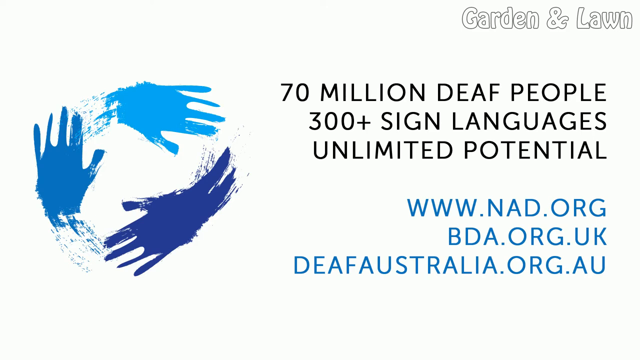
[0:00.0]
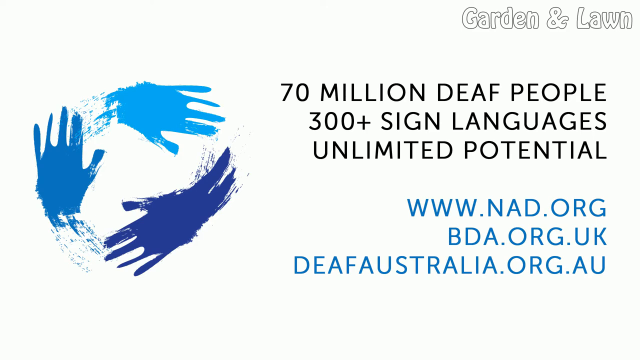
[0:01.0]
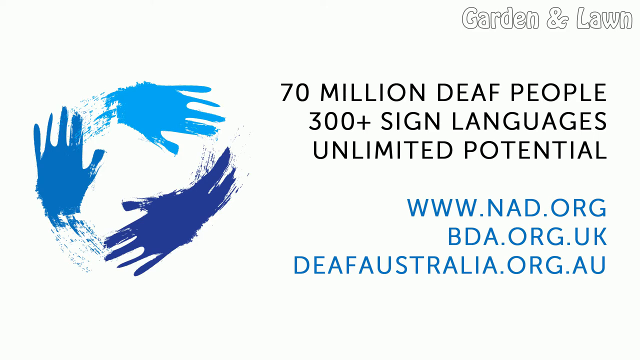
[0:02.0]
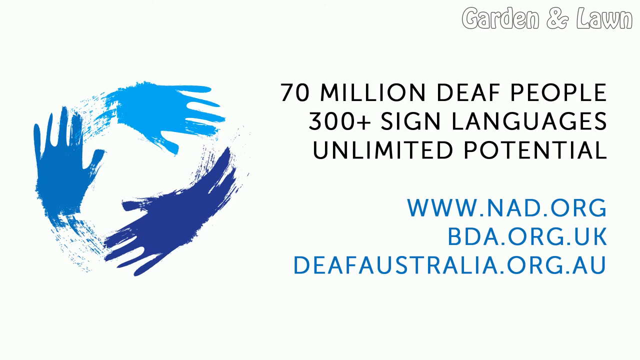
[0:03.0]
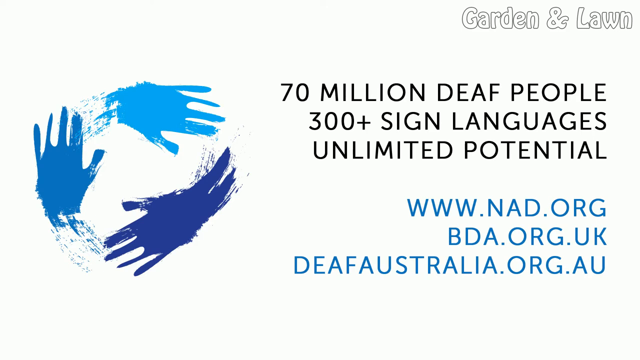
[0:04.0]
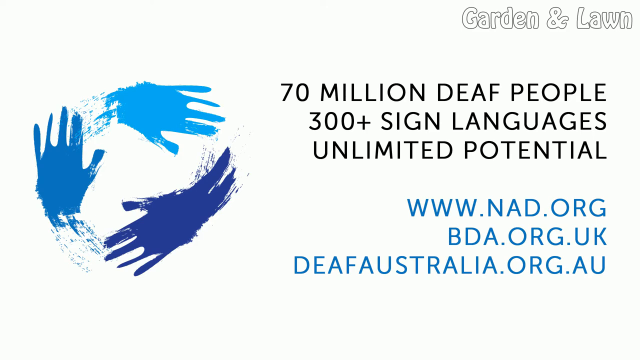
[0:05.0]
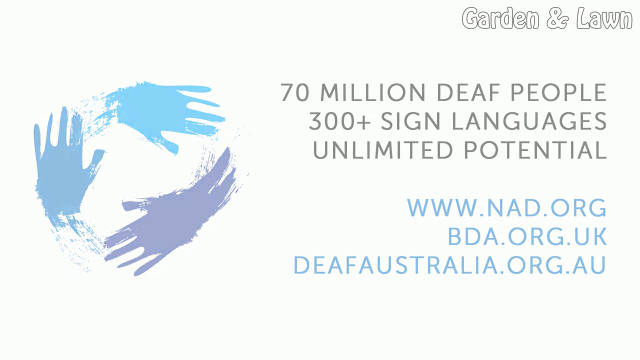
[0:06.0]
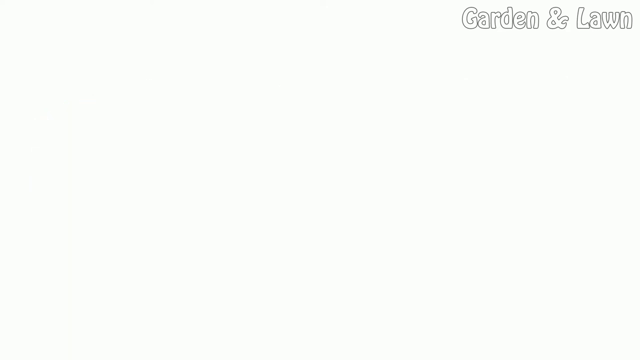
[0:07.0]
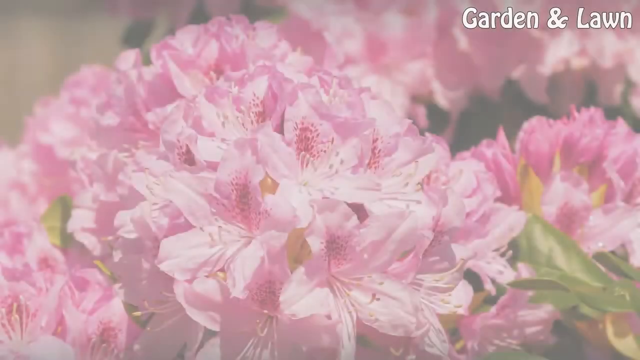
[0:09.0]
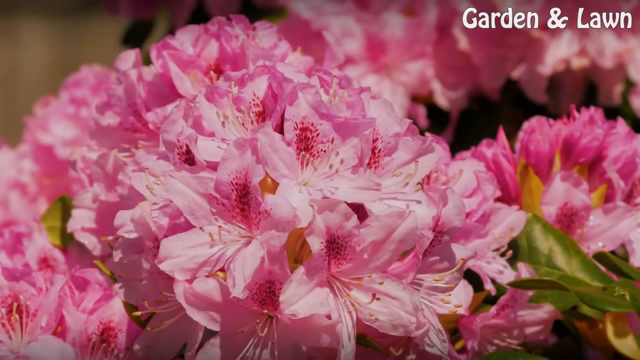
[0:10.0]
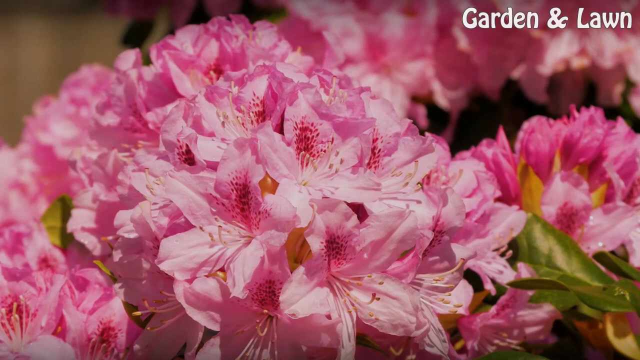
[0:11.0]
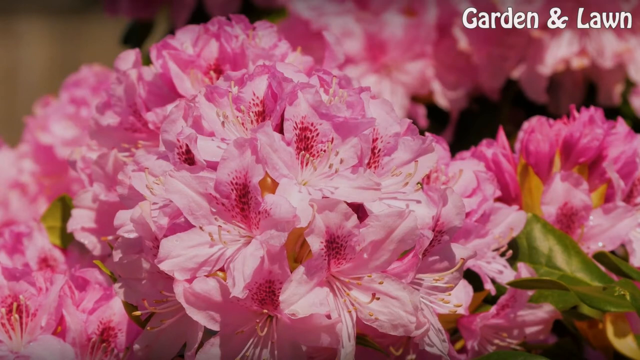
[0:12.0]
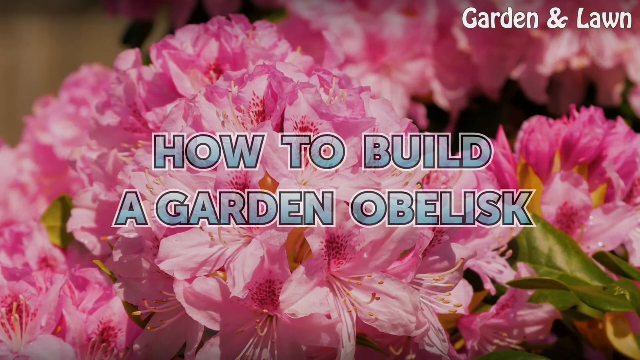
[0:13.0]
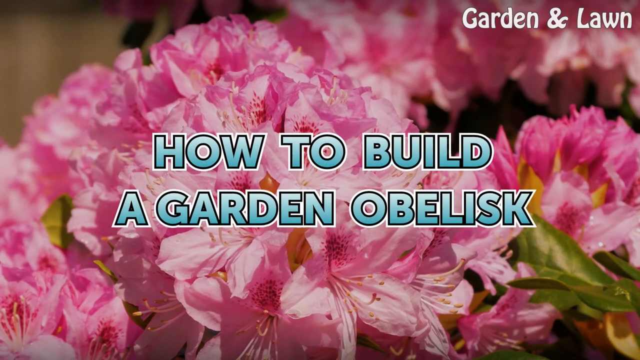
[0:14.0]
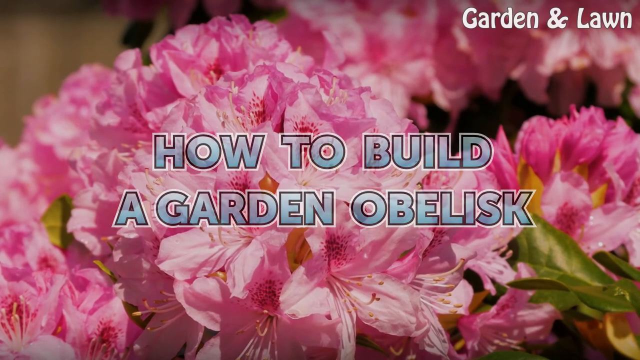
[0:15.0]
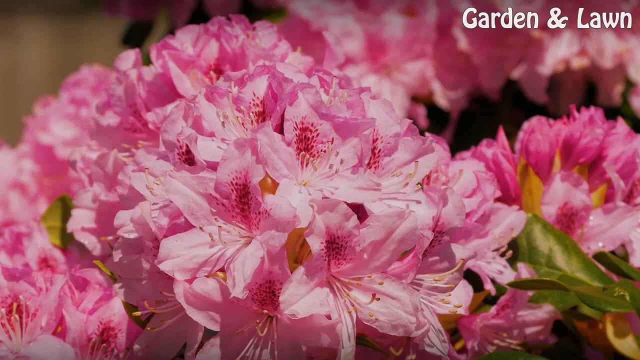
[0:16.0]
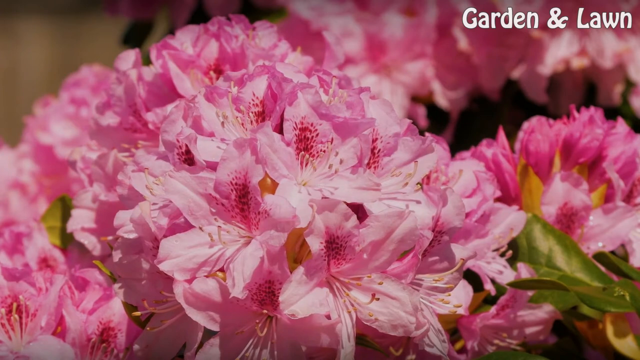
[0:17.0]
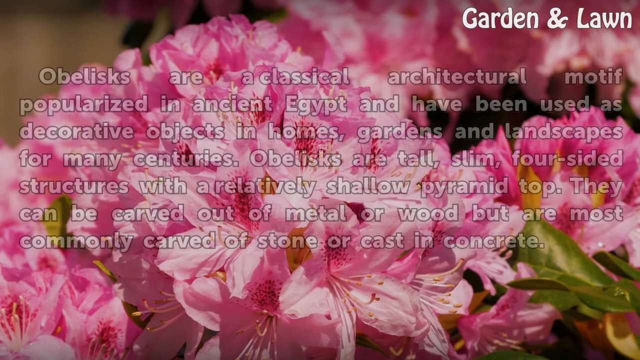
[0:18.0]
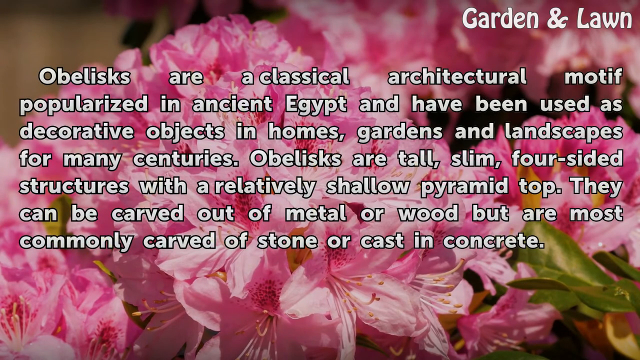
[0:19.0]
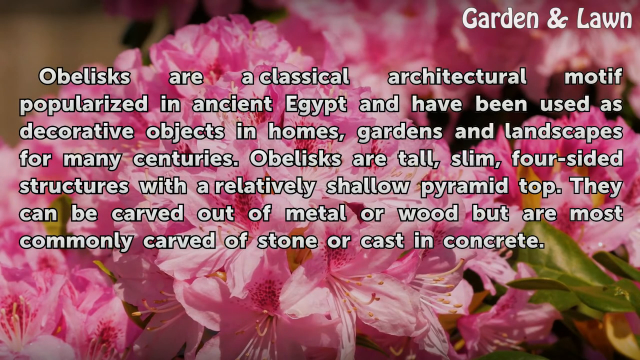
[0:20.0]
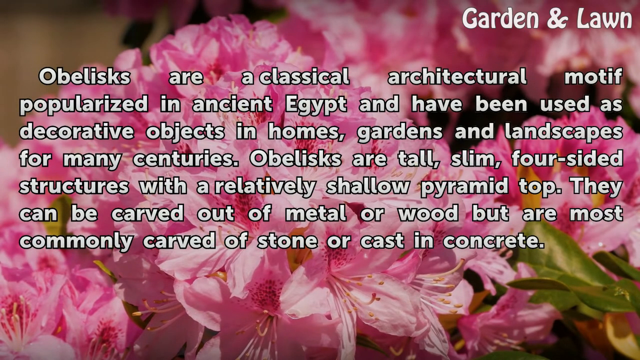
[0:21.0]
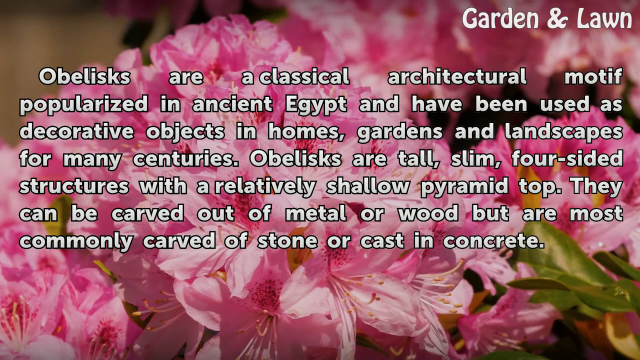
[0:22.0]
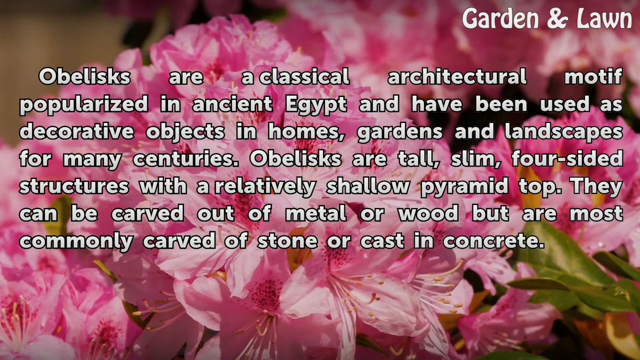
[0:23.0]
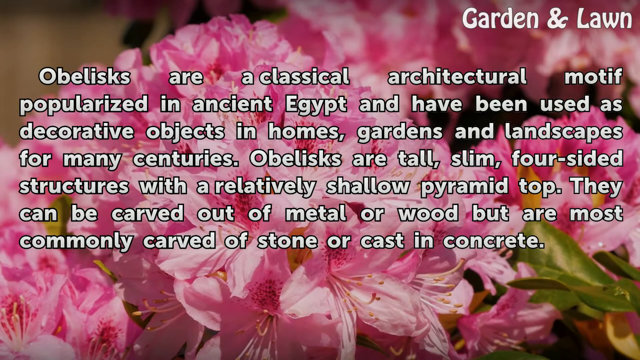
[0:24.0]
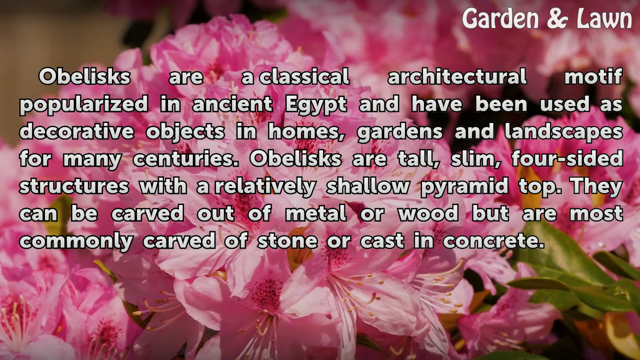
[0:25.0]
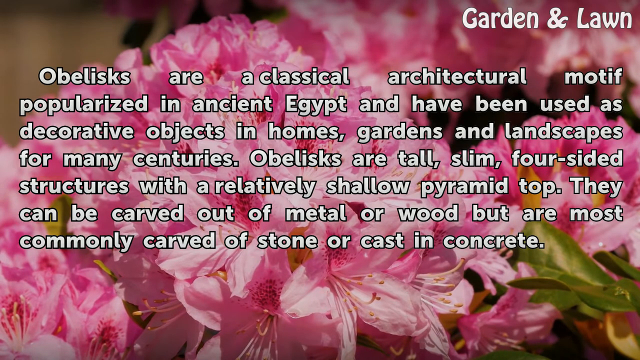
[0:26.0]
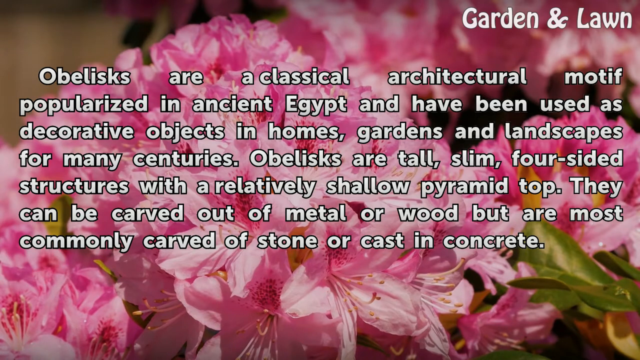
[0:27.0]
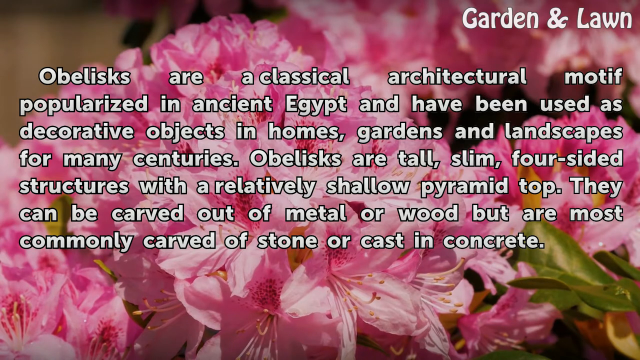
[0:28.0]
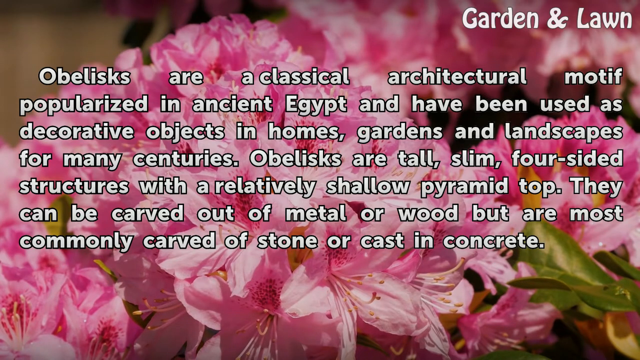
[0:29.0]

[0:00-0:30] The video opens on a white background. On the left side of the screen, three artistic hands move in a circle, ranging from light blue to dark blue. In the upper right corner, in a very subtle font, is "Garden and Lawn." Black text reads "70 million deaf people, 300+ sign languages, unlimited potential. www.nad.org, bda.org.uk, deafaustralia.org.au". The still screen slowly transitions to a background of pink flowers with very delicate petals and delicate leaves. On the right they are embellished with green foliage, with some yellow leaves showing through, and behind them is a slightly out-of-focus background of more floral petals. In the center of the screen, in a light green font outlined in black, is the title "How To Build A Garden Obelisk". The scene then transitions to white text overlaying the flower background: "Obelisks are a classical architectural motif popularized in ancient Egypt and have been used as decorative objects in homes, gardens, and landscapes for many centuries. Obelisks are tall, slim, four-sided structures with a relatively shallow pyramid top. They can be carved out of metal or wood, but are most commonly carved of stone or cast in concrete."